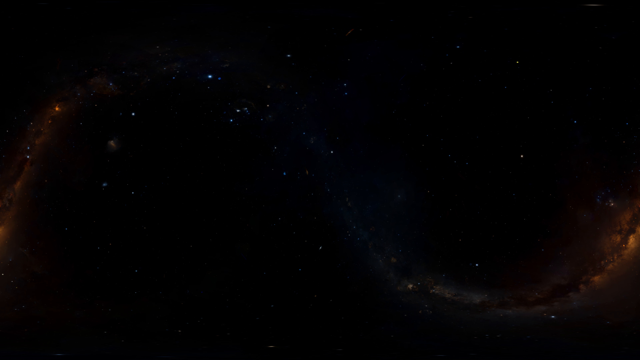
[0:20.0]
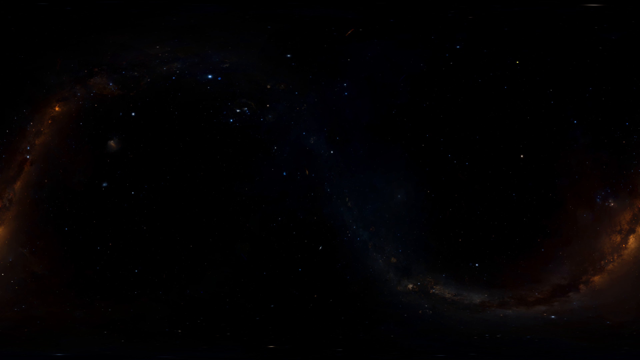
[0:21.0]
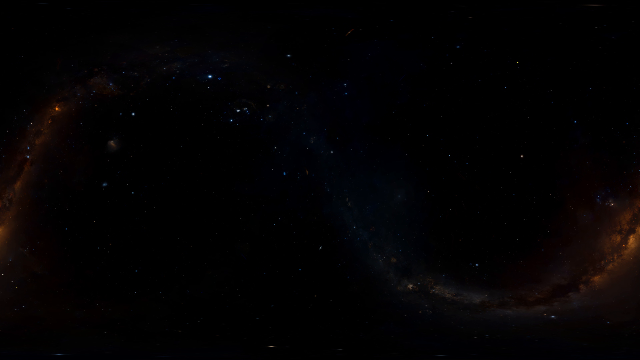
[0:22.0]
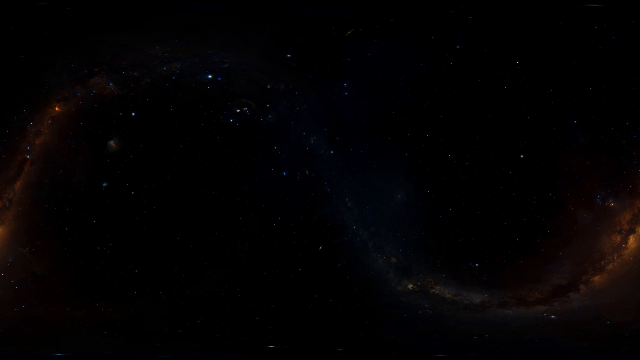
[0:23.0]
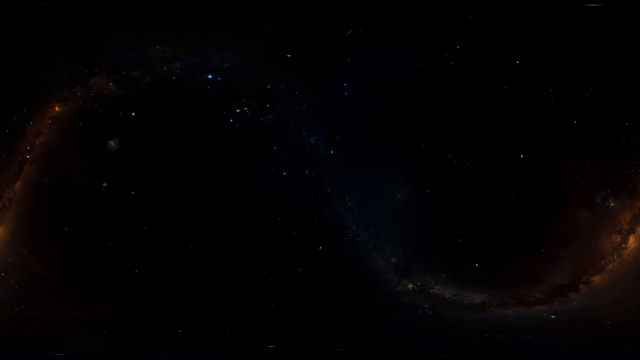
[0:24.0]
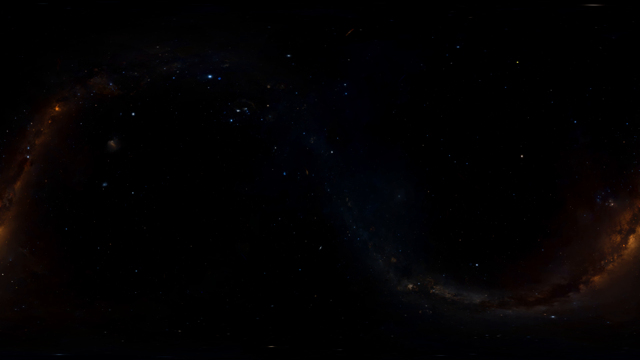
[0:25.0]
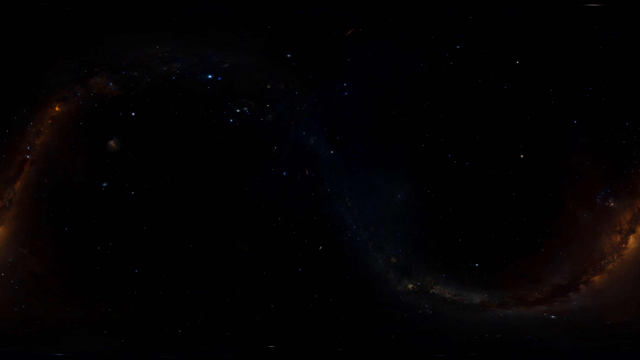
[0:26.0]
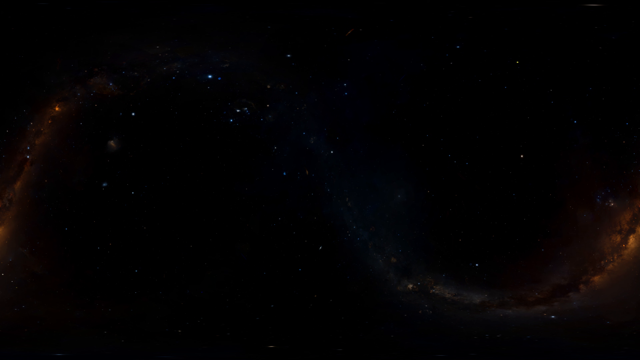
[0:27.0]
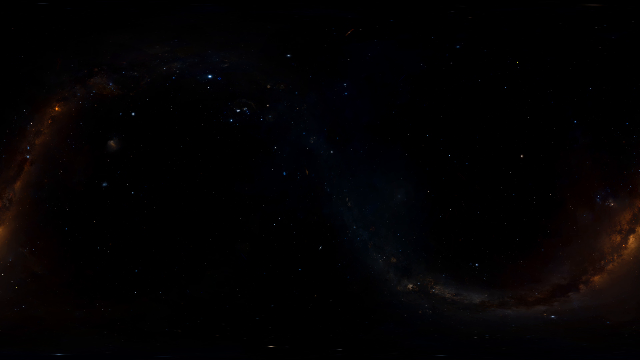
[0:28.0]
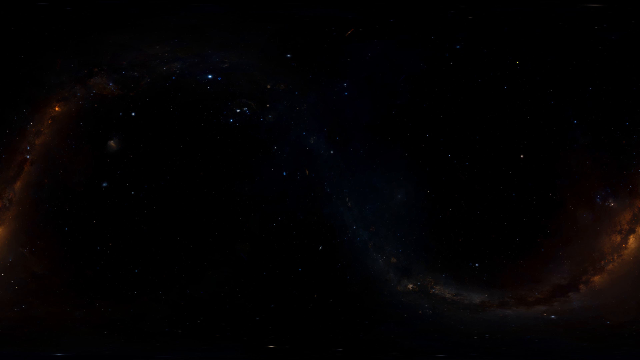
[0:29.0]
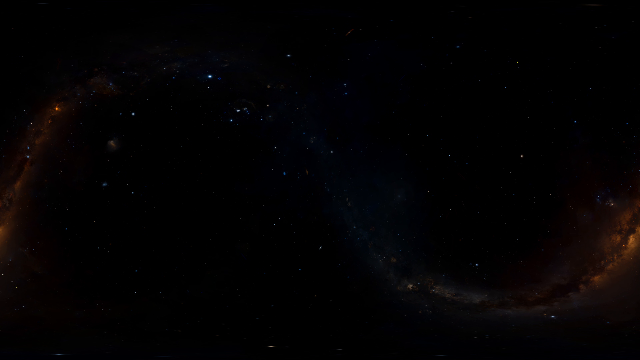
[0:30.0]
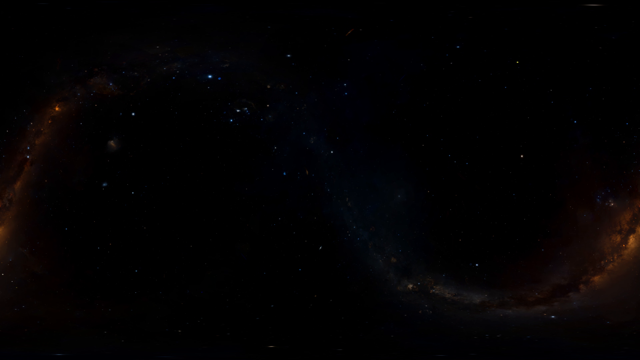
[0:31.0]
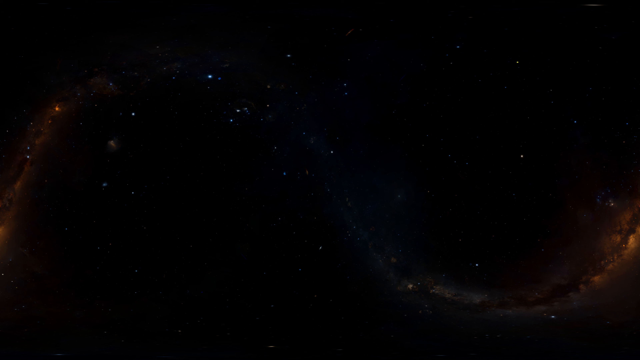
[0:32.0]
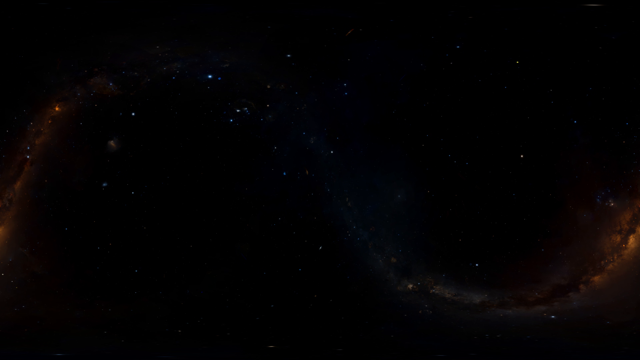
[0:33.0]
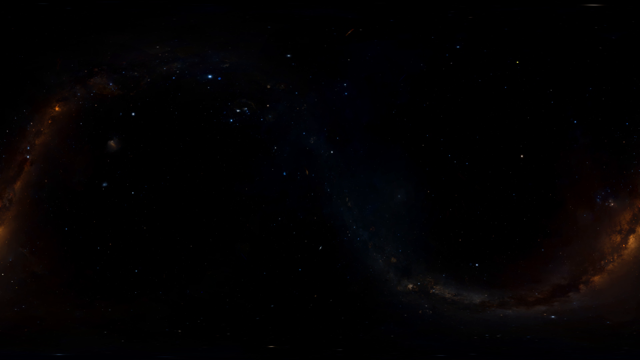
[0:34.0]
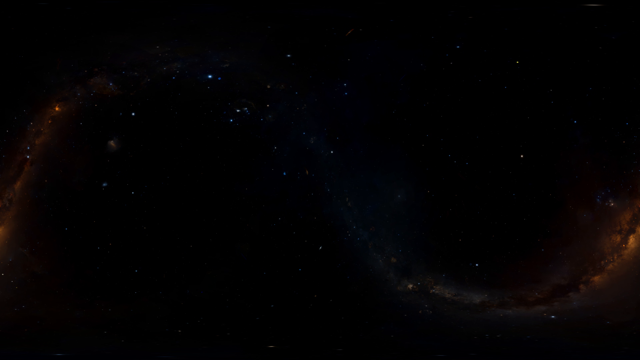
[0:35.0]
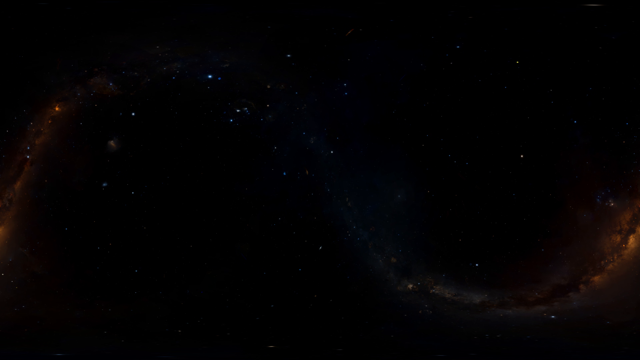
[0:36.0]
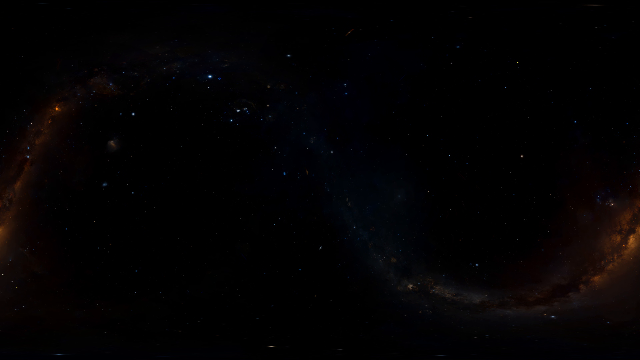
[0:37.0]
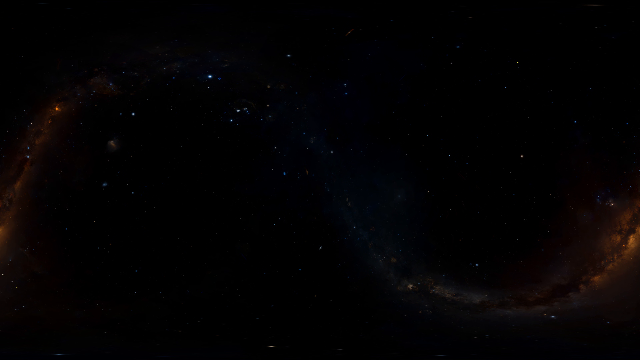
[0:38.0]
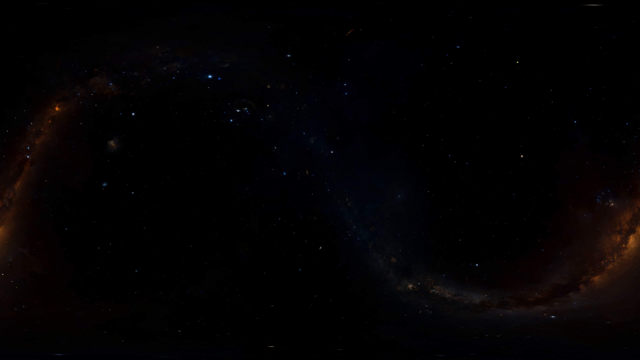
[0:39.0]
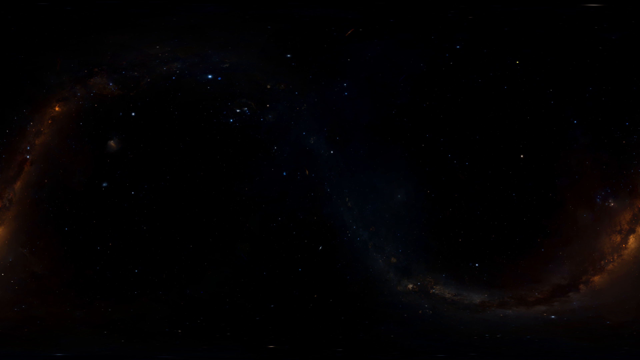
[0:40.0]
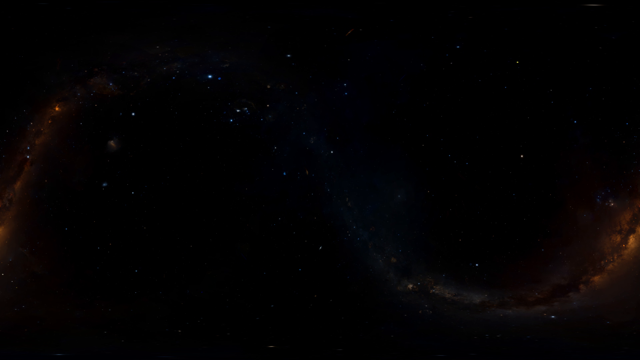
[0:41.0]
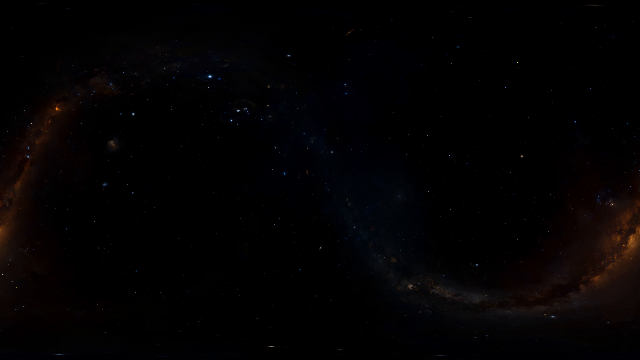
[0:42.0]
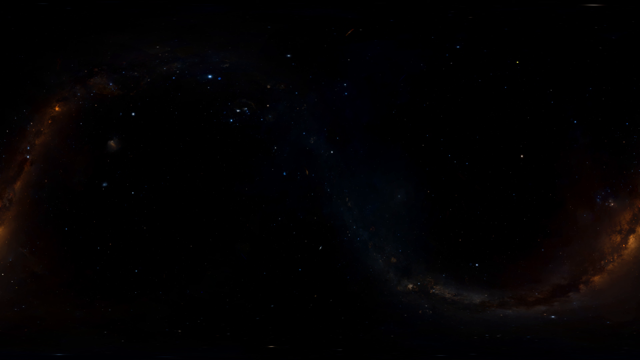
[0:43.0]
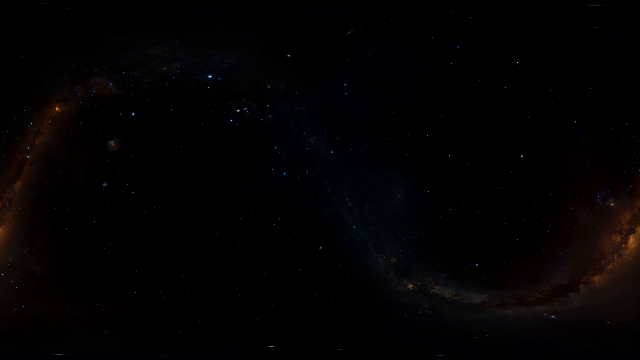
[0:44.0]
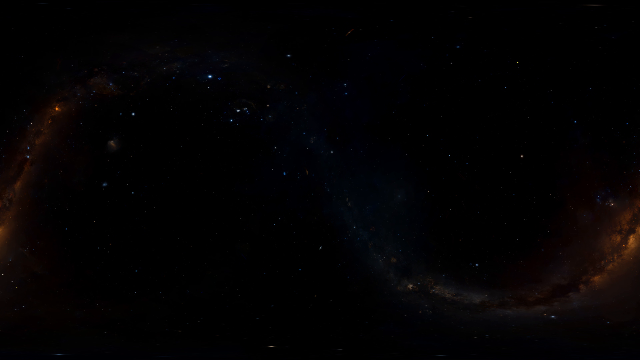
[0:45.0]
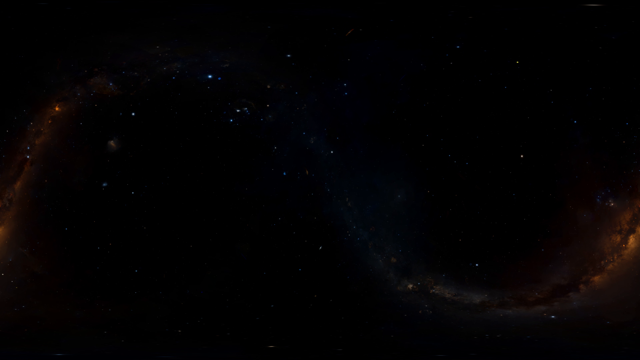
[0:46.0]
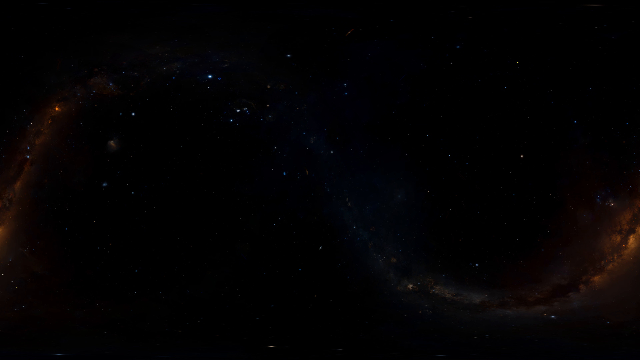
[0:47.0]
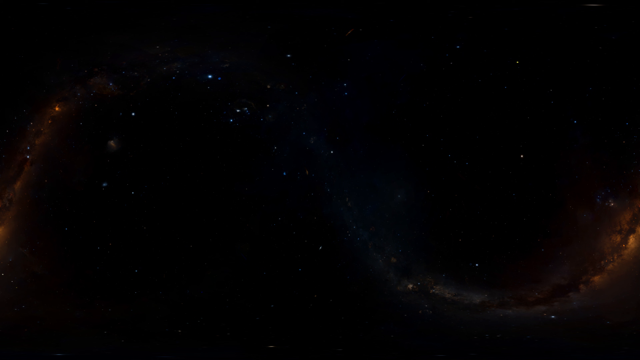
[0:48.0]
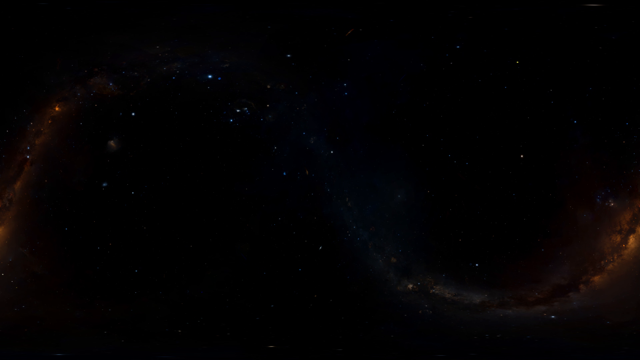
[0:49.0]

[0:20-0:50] A very dark screen looks like a view of distant stars in outer space. The stars are very faint, just dots, mostly white or pale blue. In the lower right corner there are orange plumes that look like gas or clouds, and a tiny streak of the same appears on the left side of the screen. Apart from the darkness and the faint dotted stars, there is nothing else on screen. The stars are evenly spaced out, and the dots are so tiny they look like specks in the distance. A few of the stars are faint or pale blue while others are more white, though they are so small that color differences are hard to tell; they mostly look pale blue or white.